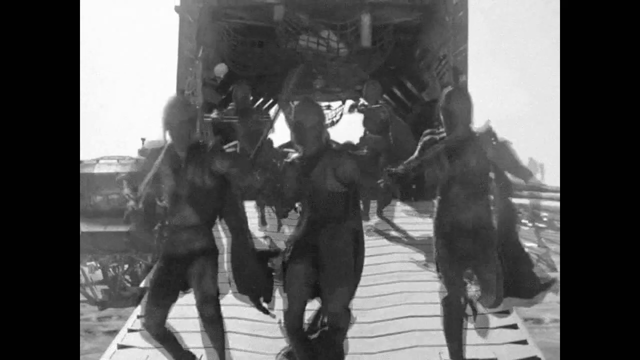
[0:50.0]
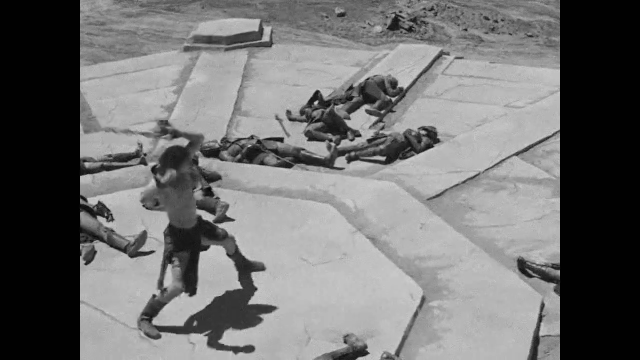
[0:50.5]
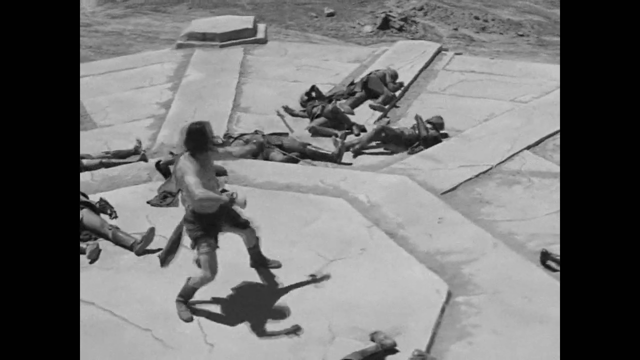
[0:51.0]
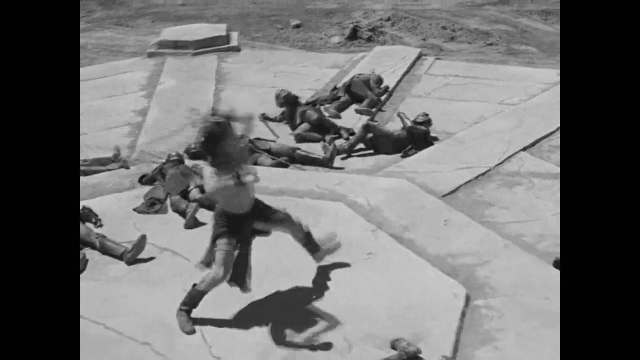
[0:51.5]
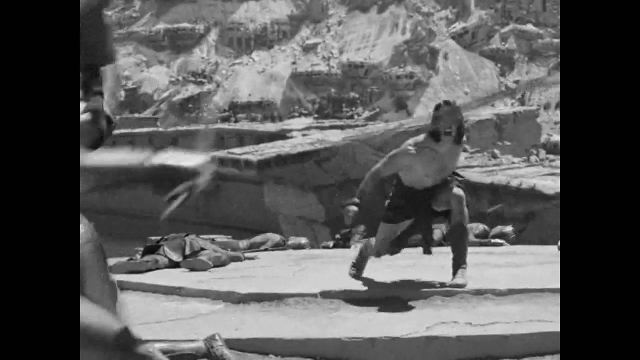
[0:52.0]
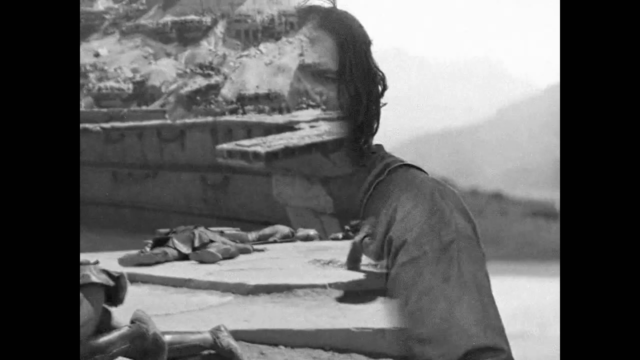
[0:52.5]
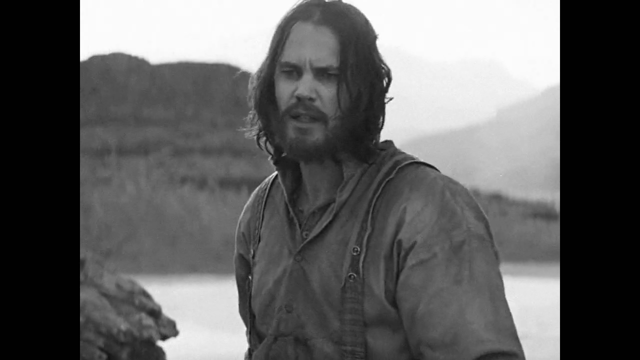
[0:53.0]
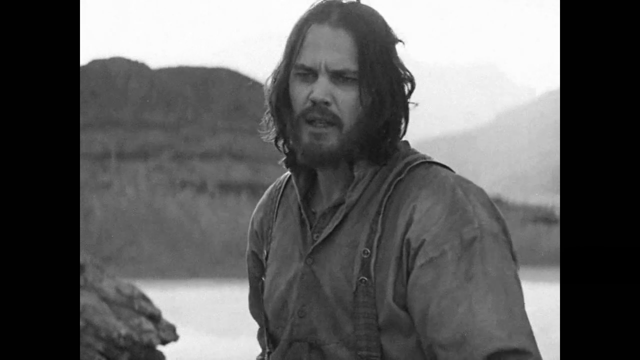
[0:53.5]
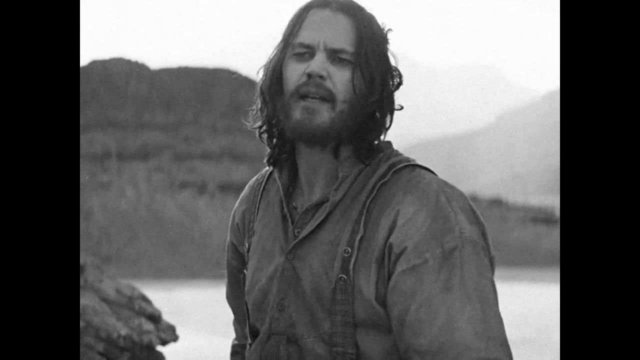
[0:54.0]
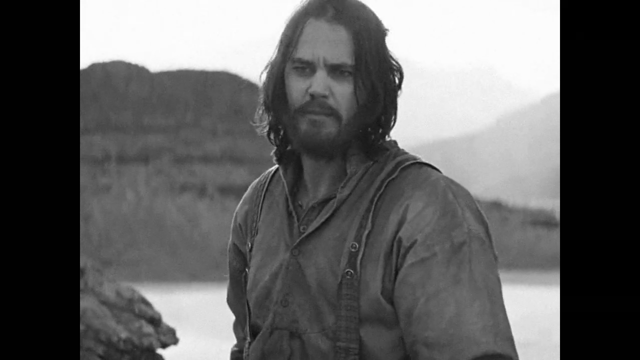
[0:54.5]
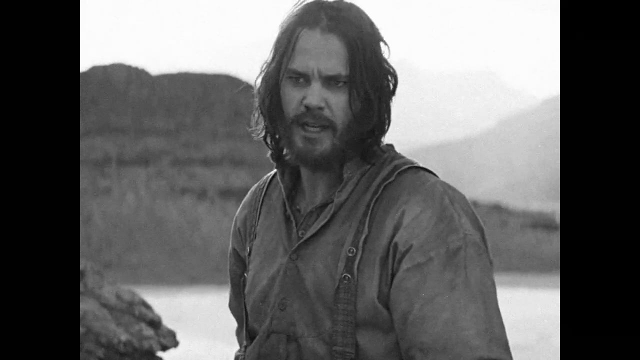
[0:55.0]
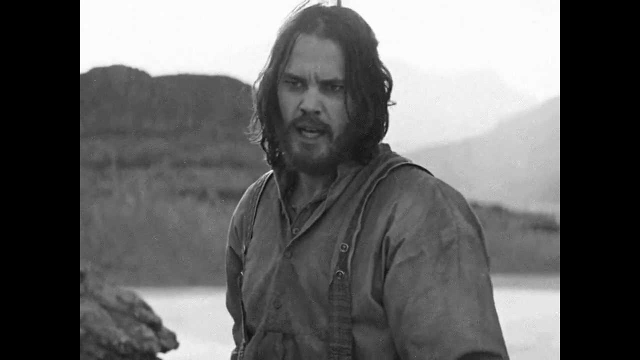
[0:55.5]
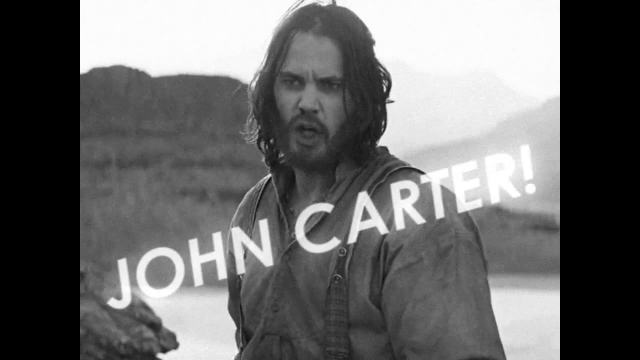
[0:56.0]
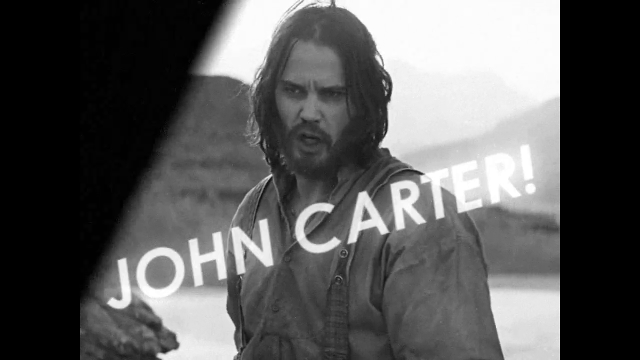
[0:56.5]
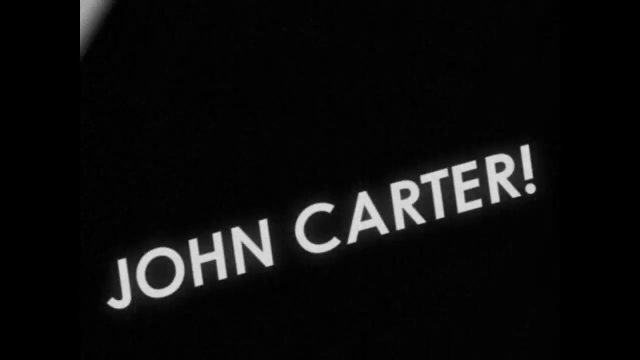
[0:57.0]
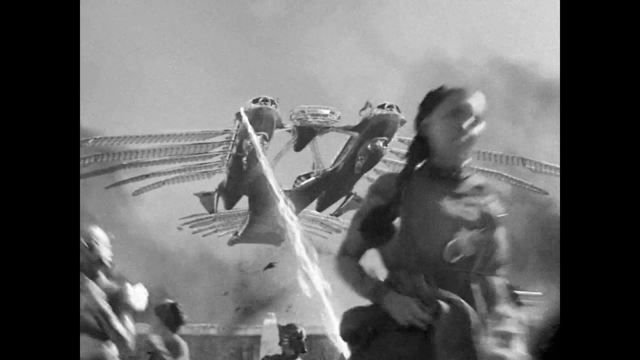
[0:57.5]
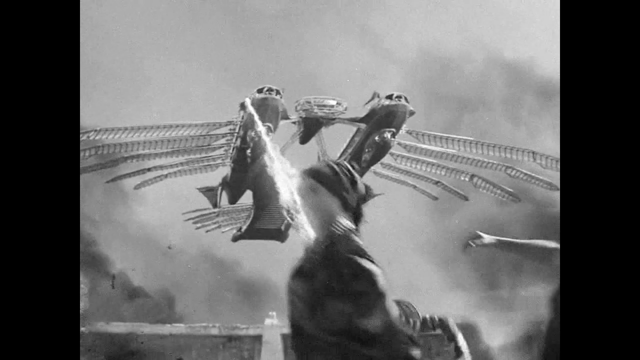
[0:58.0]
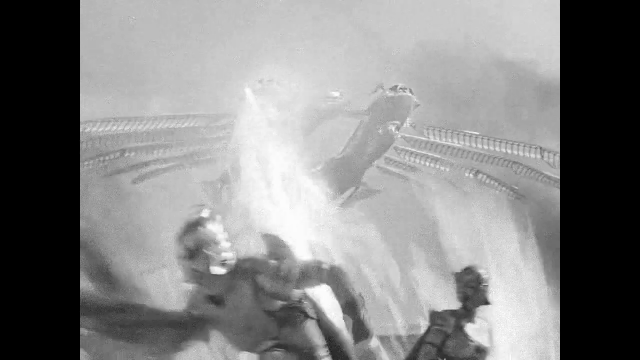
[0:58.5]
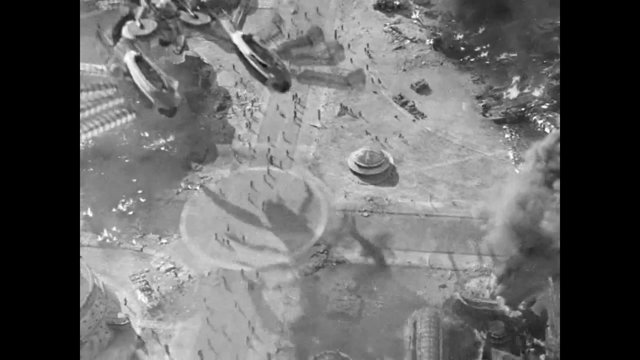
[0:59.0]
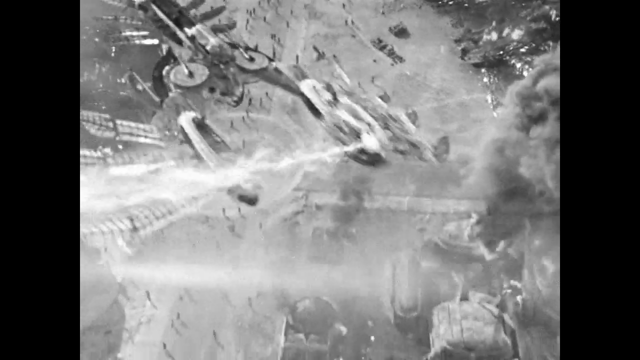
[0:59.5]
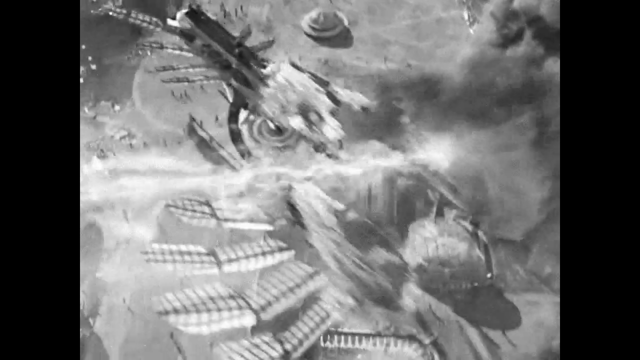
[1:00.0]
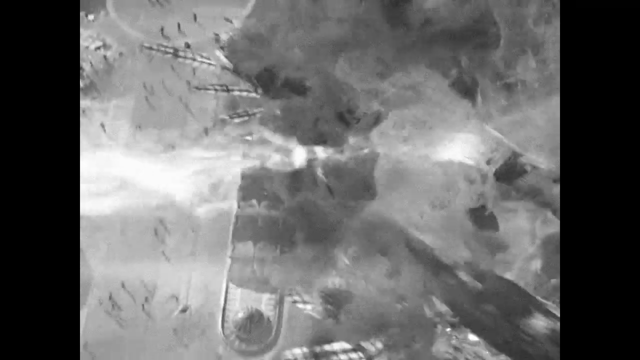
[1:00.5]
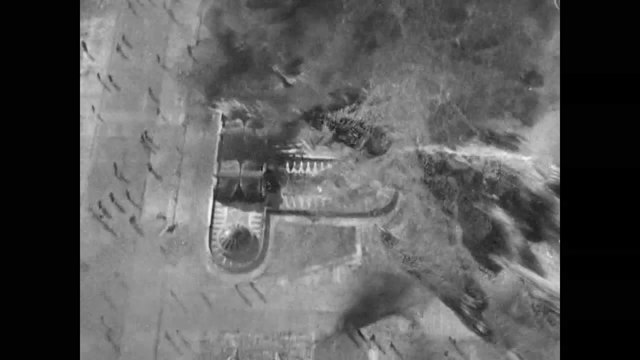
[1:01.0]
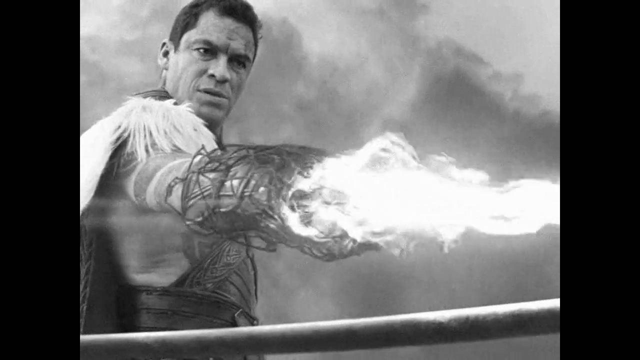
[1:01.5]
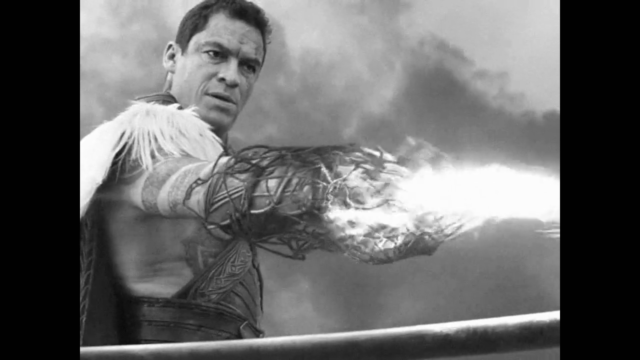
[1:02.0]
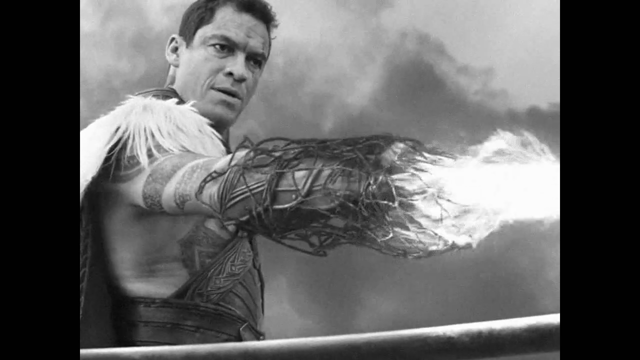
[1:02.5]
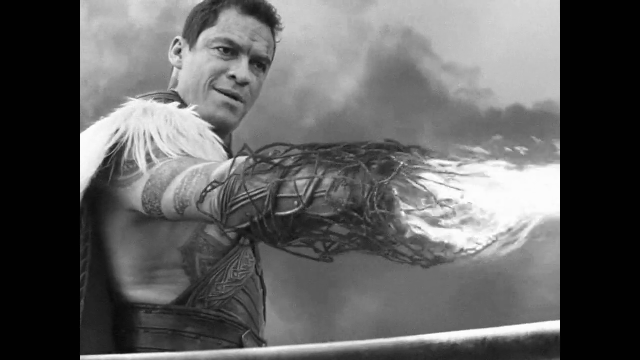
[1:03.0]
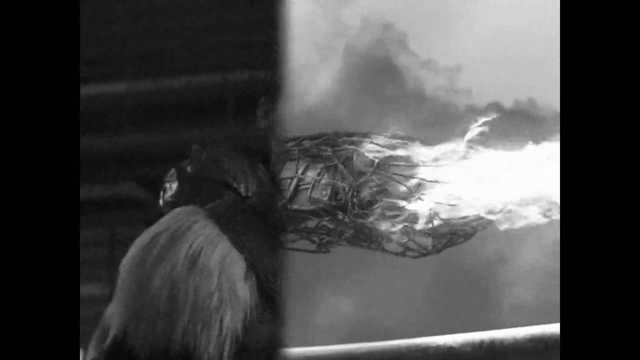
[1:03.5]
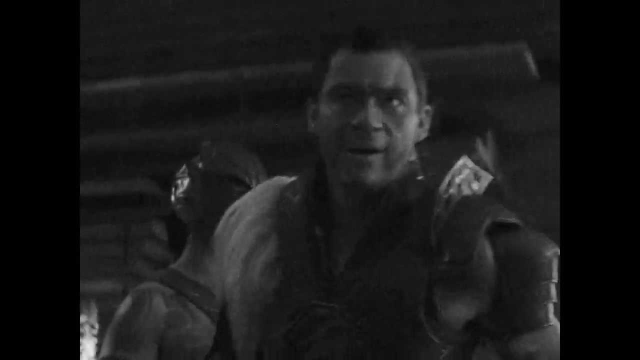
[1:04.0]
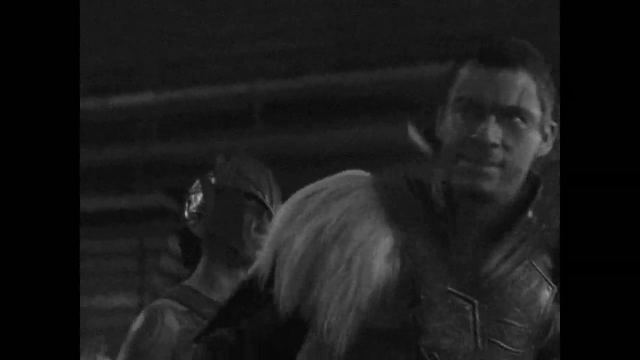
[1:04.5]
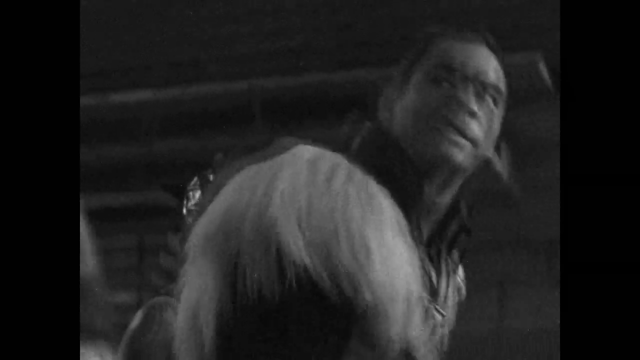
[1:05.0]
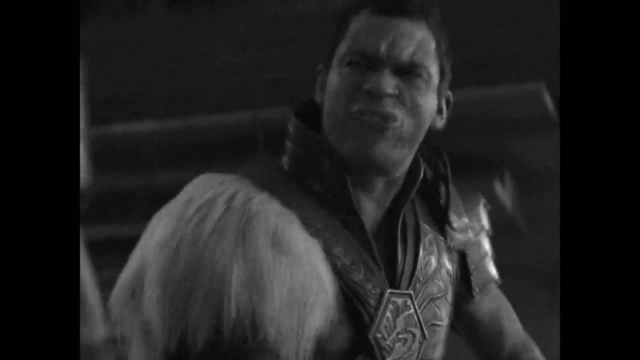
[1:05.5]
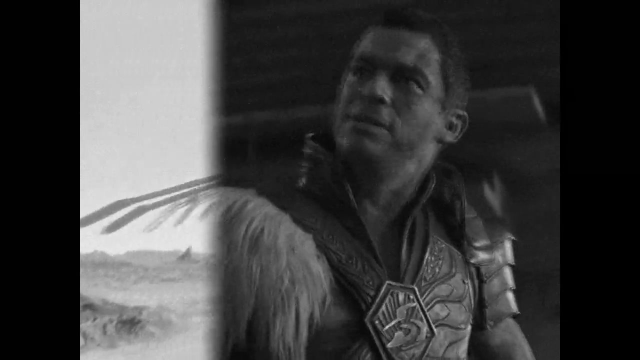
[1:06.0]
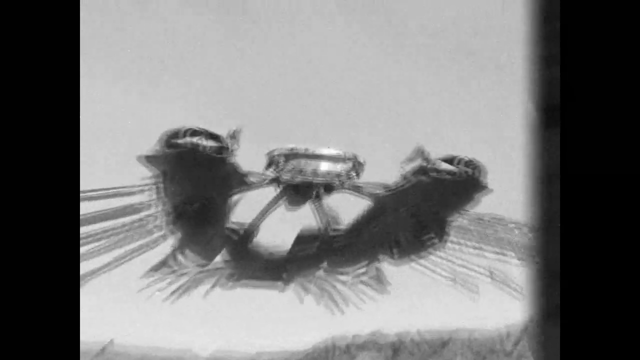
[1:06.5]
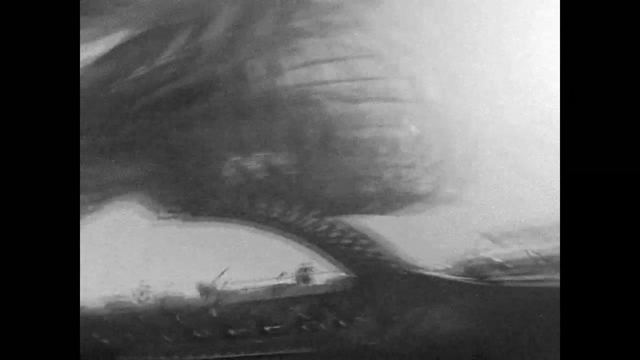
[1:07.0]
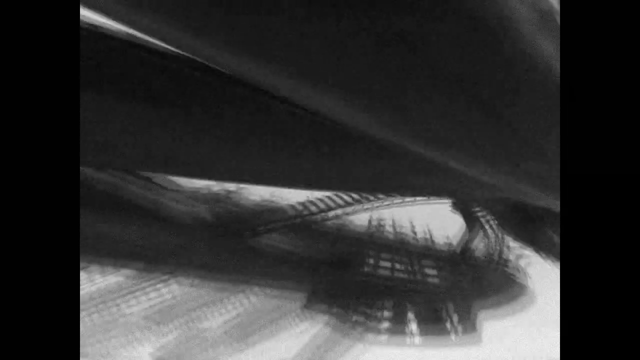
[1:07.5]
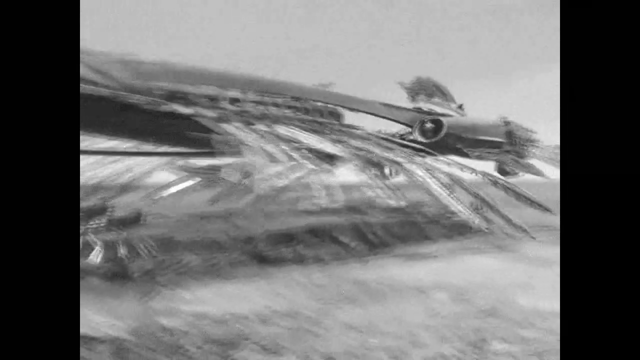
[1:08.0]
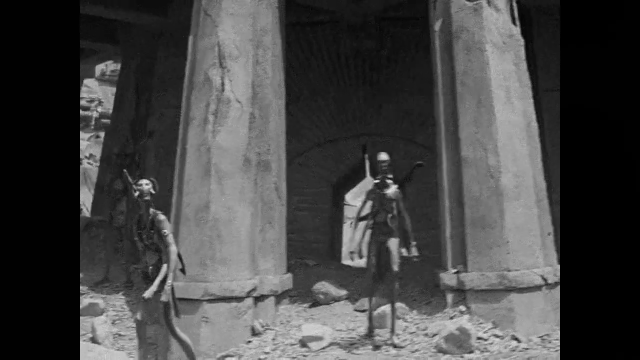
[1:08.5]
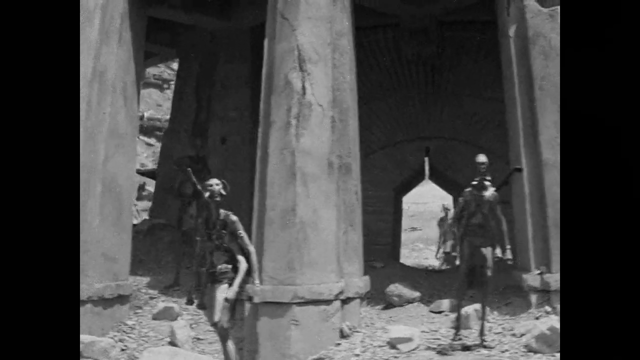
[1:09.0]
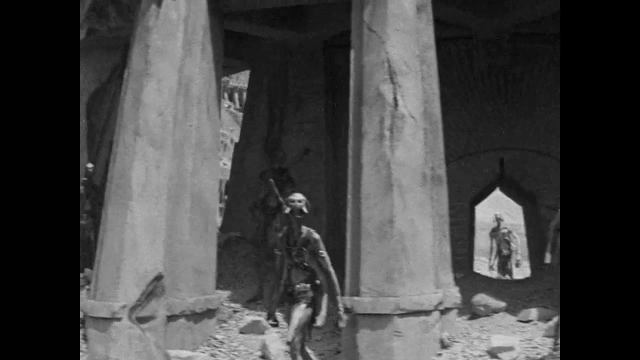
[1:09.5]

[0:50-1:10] The man keeps fighting everyone. Four more men appear, and at least six men already lie on the ground next to him while he fights someone else. John Carter is seen, along with a spaceship shooting rays down to the ground as people run from them; the spaceship disappears after another man sends a ray at it. A man yells at someone who cannot be seen, and another spaceship and another strange creature watch what is happening. Everyone is fighting, and because everything is in black and white it is hard to tell who is who, who is fighting whom, or why.